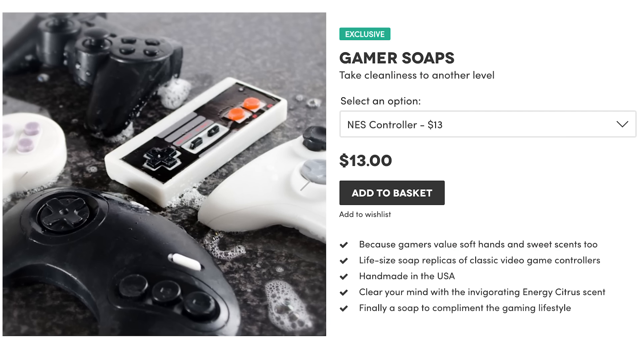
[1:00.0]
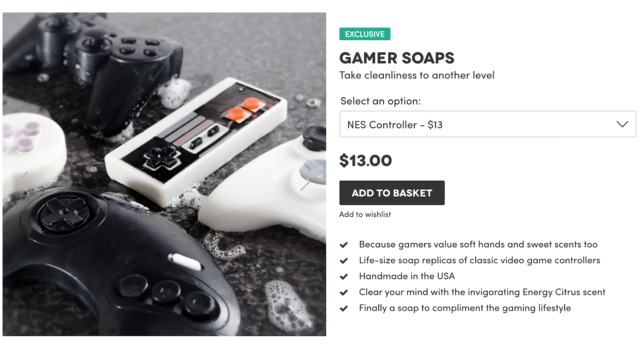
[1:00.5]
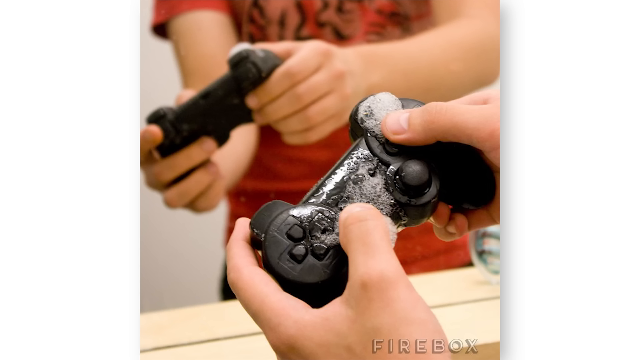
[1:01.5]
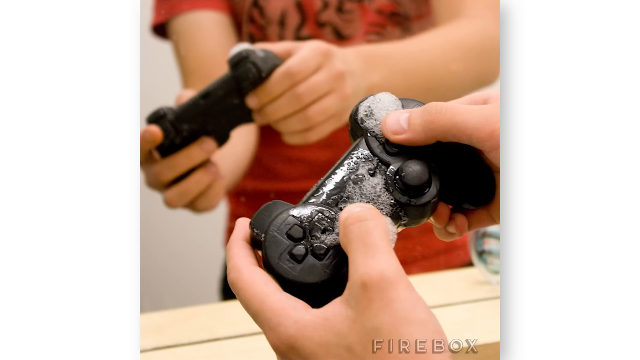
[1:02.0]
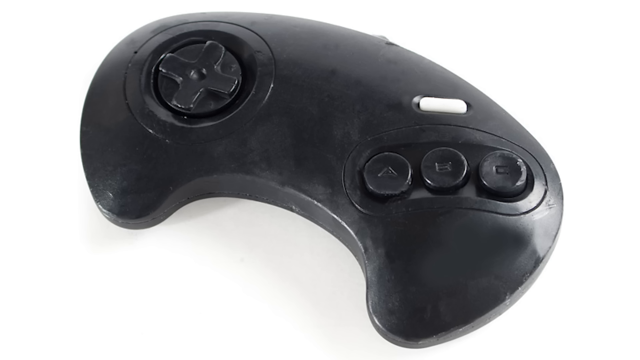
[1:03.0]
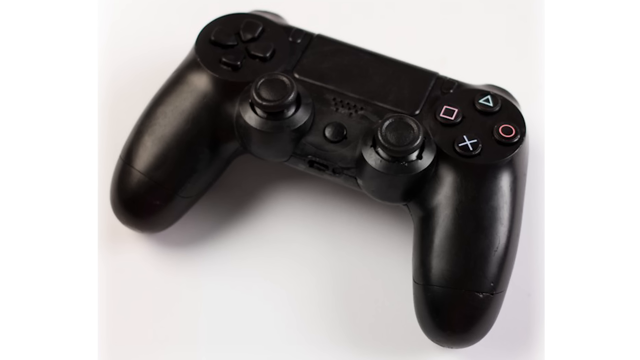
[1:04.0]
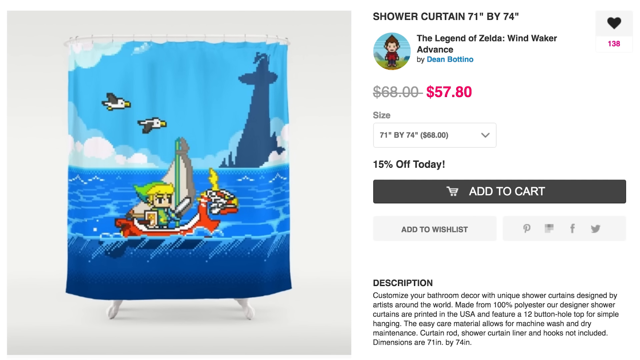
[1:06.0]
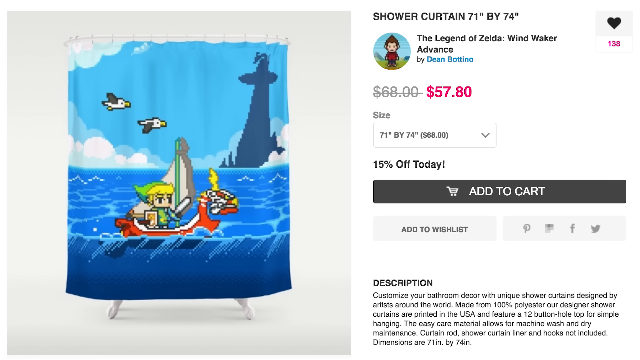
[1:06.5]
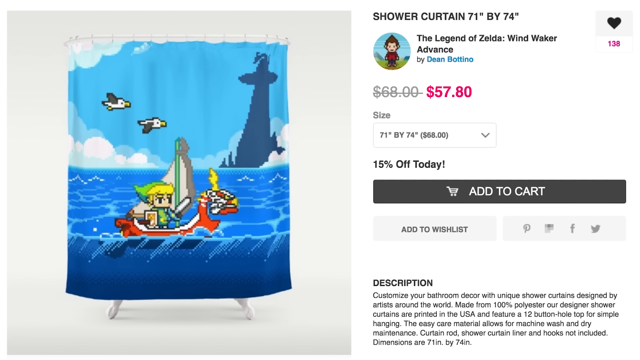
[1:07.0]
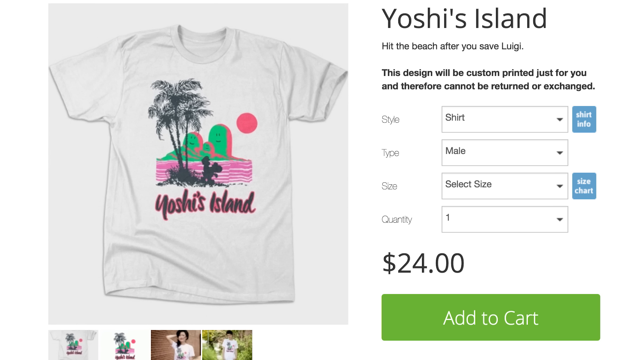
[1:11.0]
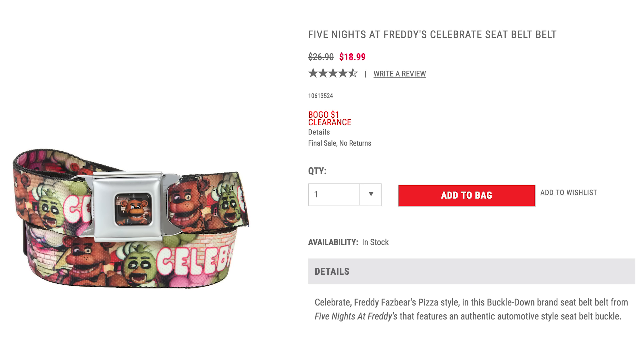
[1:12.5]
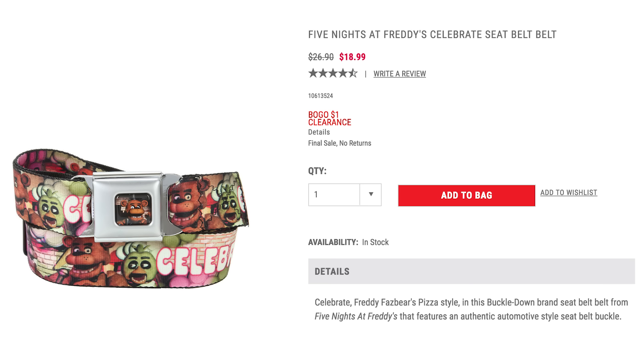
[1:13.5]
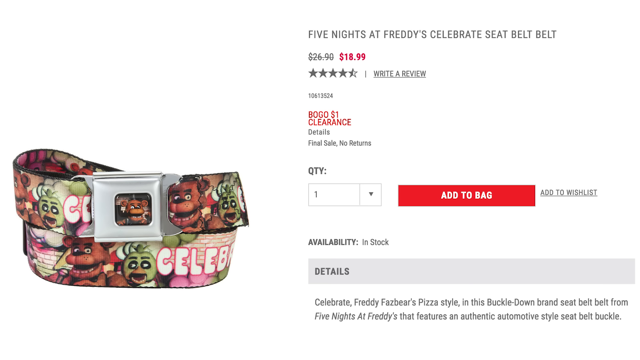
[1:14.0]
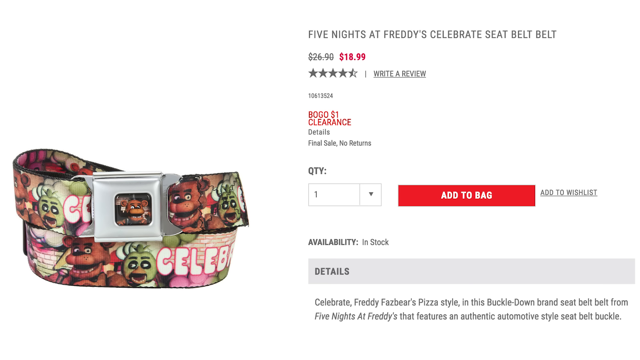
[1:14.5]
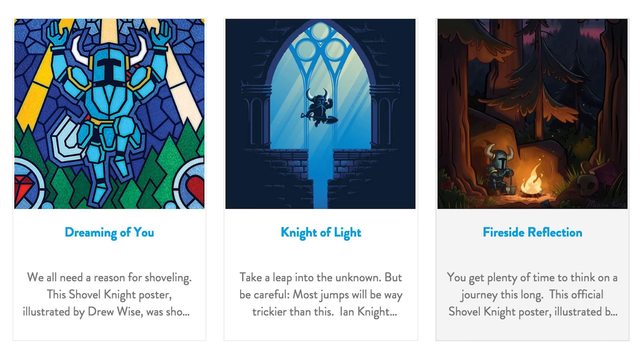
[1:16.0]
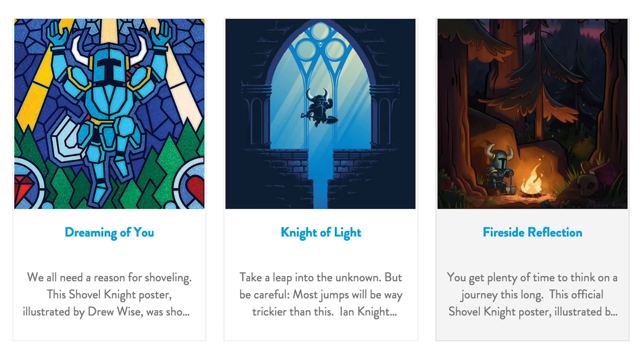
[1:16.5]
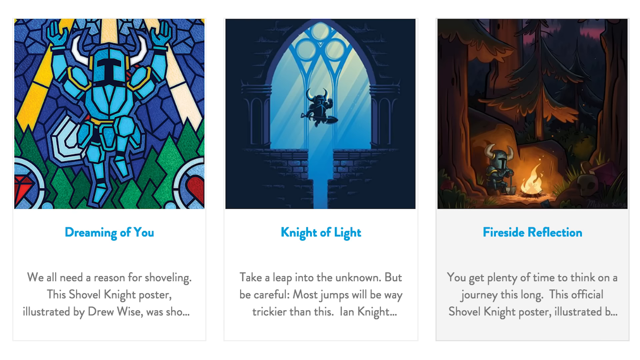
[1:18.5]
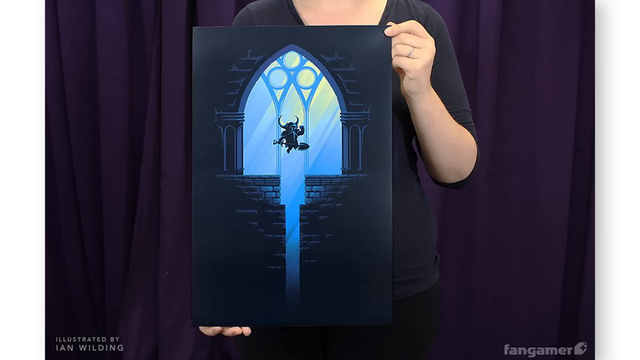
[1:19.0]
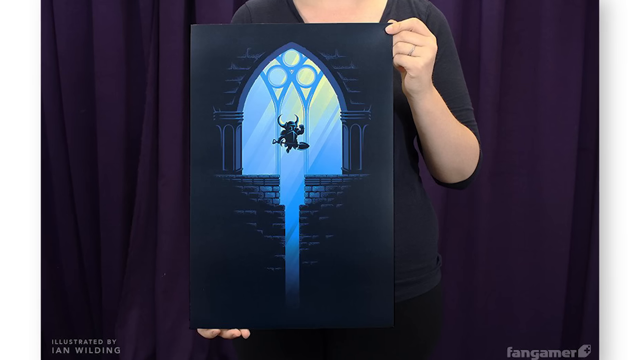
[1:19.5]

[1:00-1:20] Different game controllers are shown, which turn out to be soaps; they come as different controllers, including Sega Genesis and PS4, at $13. An ad appears for a Zelda Wind Walker shower curtain showing Zelda on a boat on the water with two birds above it and a tall castle. The water is very blue with waves, and the bottom of the boat is visible under the water. The curtain looks like it is covering a bathtub, and it is 15% off at $57. A Yoshi's Island t-shirt shows the island. Then a knight is shown, with t-shirts and a variety of other products offered for it.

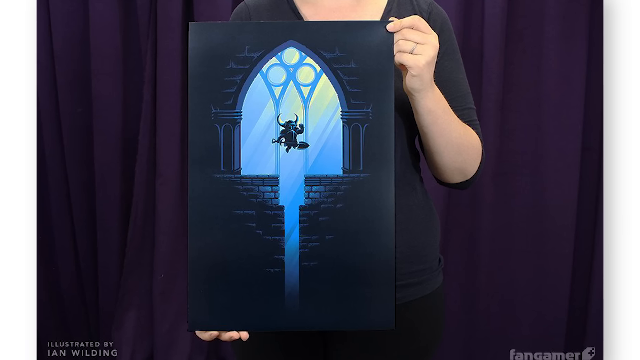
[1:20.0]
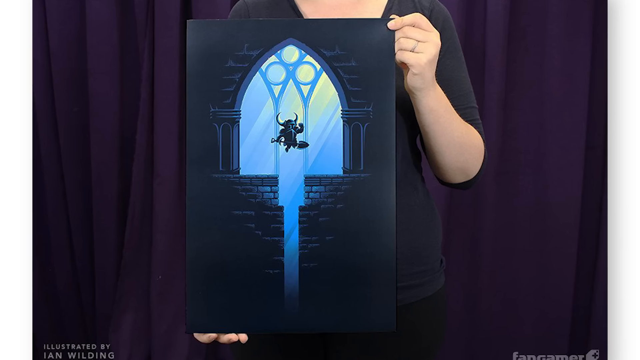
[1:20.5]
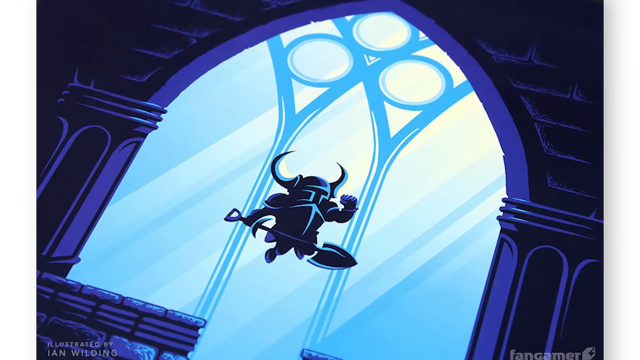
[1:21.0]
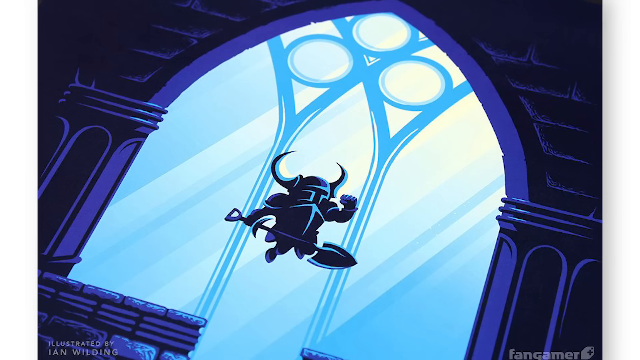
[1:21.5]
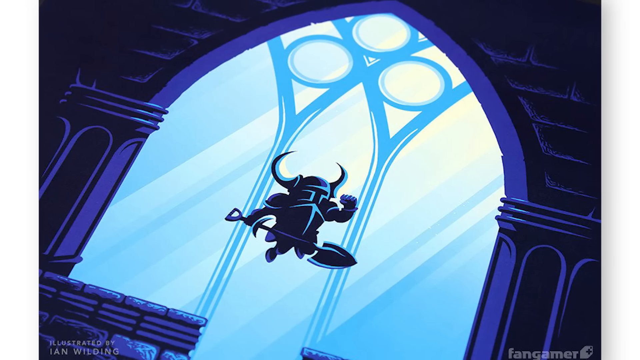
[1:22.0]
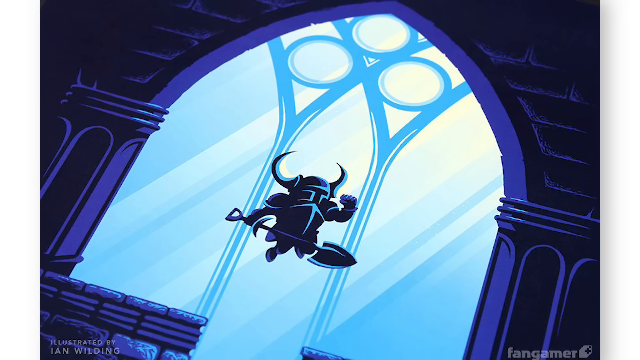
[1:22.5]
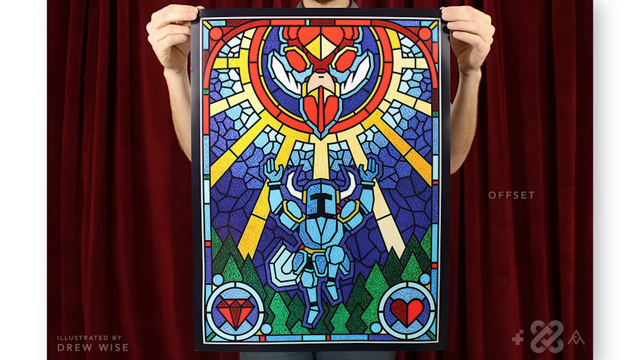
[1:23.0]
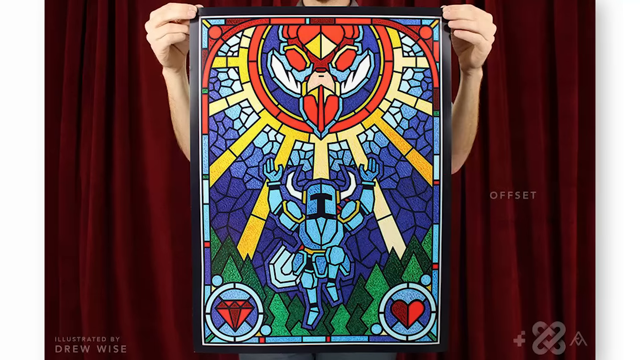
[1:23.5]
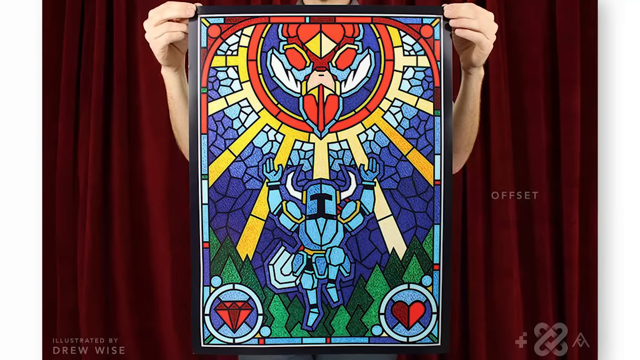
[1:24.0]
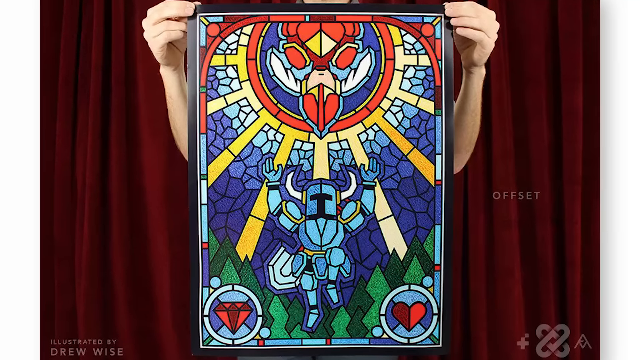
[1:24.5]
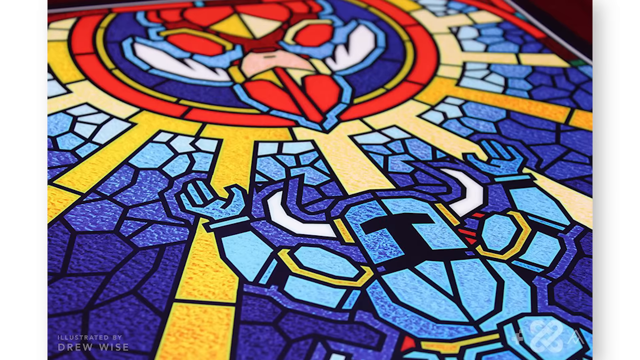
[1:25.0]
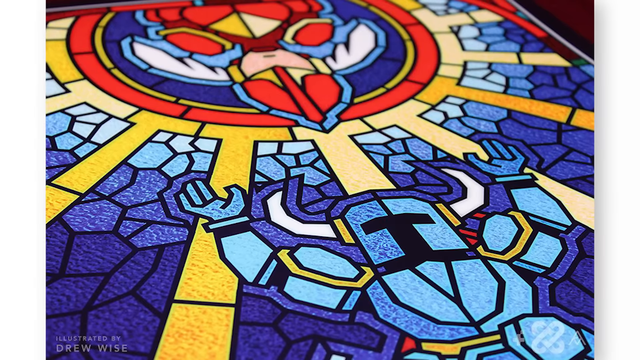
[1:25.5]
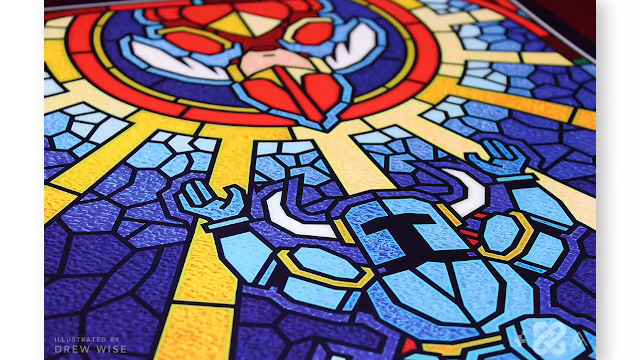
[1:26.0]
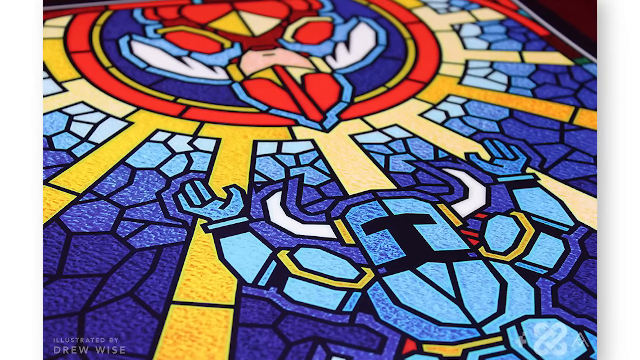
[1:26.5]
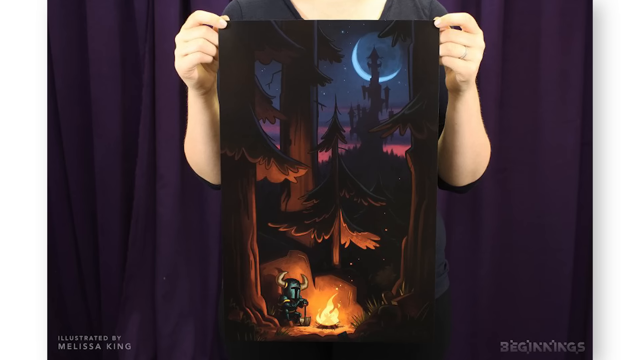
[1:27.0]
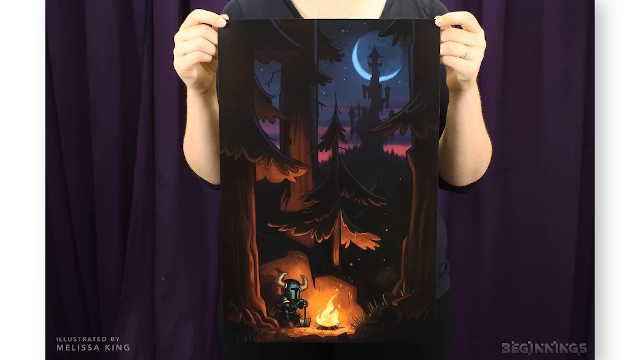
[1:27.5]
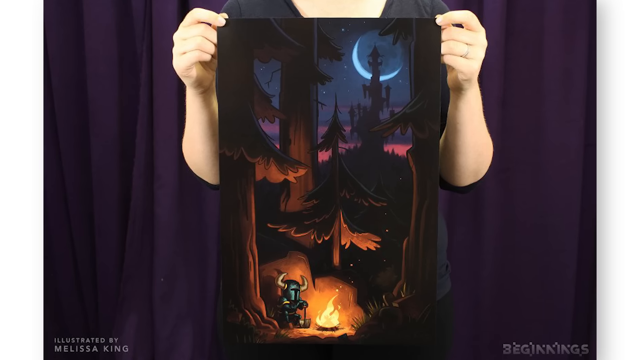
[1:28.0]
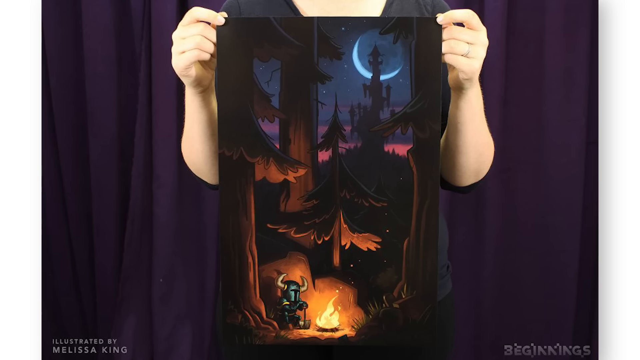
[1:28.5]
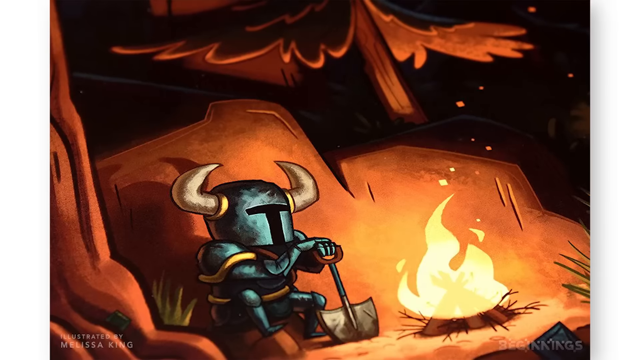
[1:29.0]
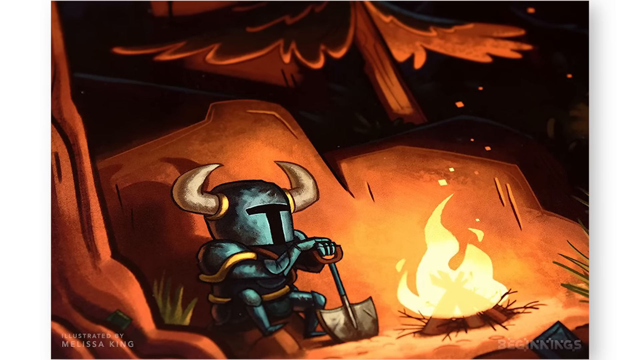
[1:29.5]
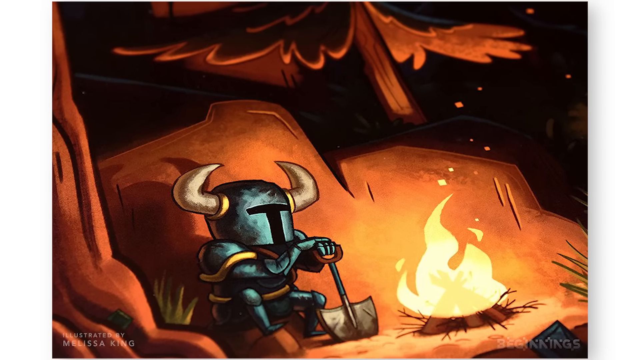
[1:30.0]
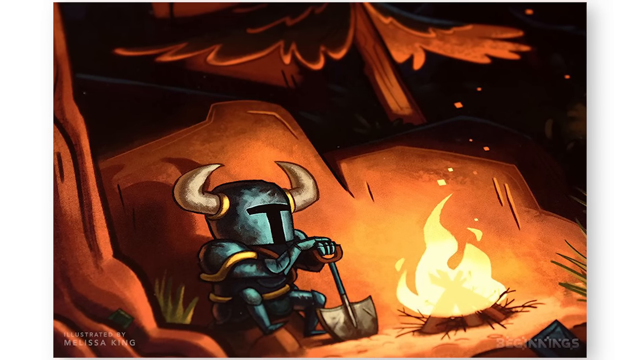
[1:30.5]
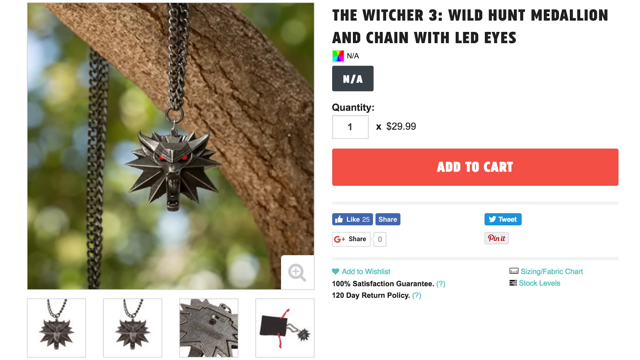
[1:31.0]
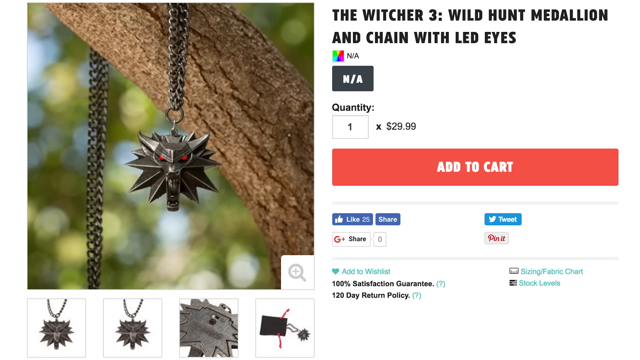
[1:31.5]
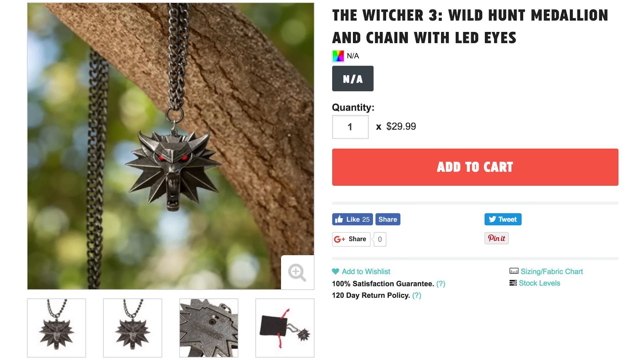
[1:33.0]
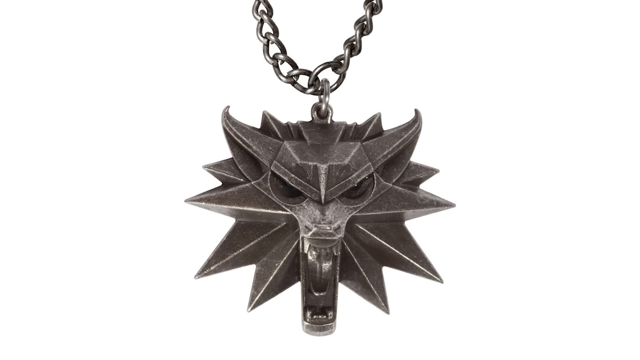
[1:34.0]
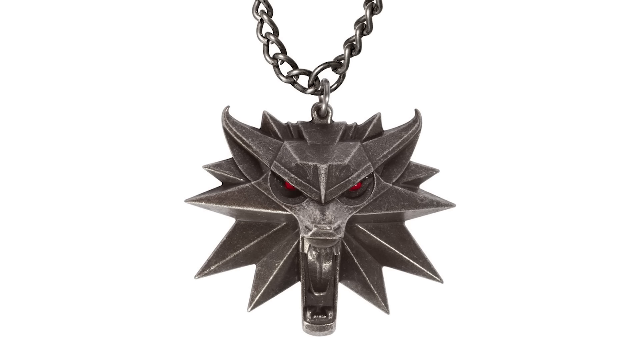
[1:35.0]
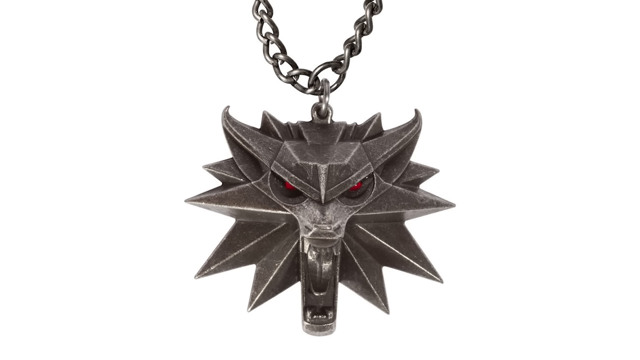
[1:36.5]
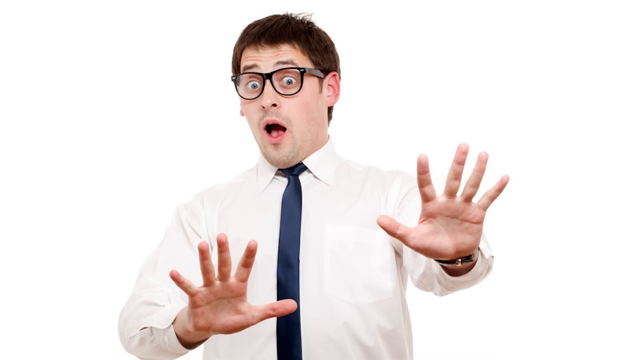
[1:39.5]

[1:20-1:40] A knight appears on a painting that looks like big stained glass, blue with black on it; the knight holds up his fist and a crossbow. The knight then appears on a very colorful mosaic, seemingly reaching out, with what look like some kind of creatures at the top. Then a shovel appears; the knight's eyes are not visible, and it is reaching up toward something. The knight is next seen in a wilderness setting with a big crescent moon and big trees around, sitting at a fire and somewhat staring into it. It is shown again with a shovel and big horns, very reflective. A medallion on a metal chain has LED lights so it glows, seemingly shaped like a dragon head or something similar.